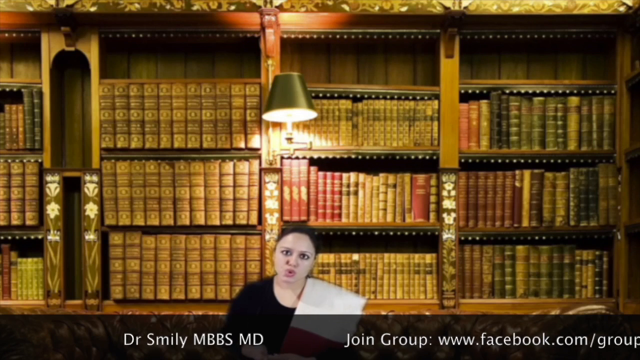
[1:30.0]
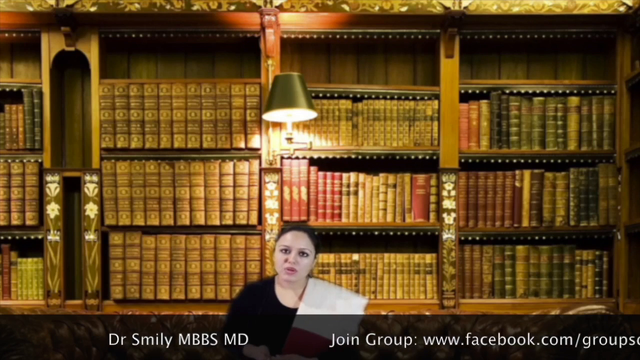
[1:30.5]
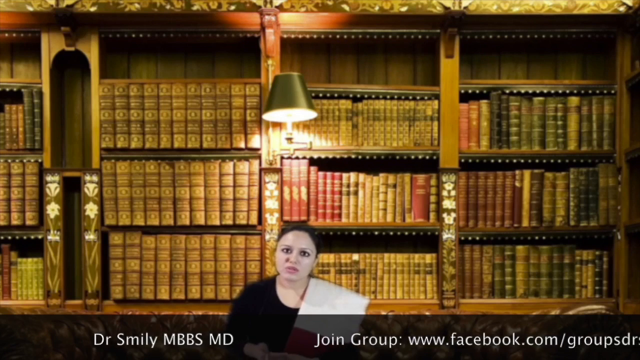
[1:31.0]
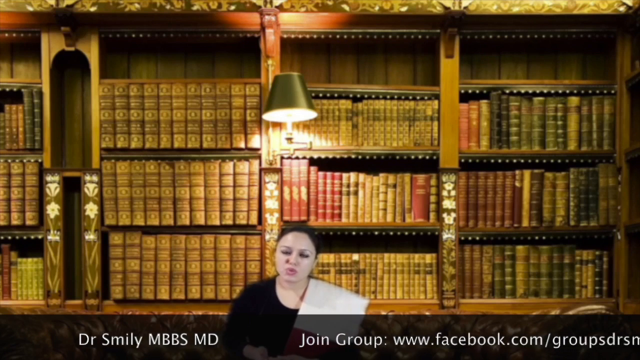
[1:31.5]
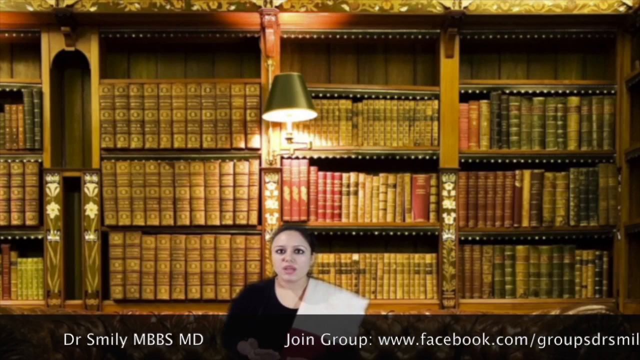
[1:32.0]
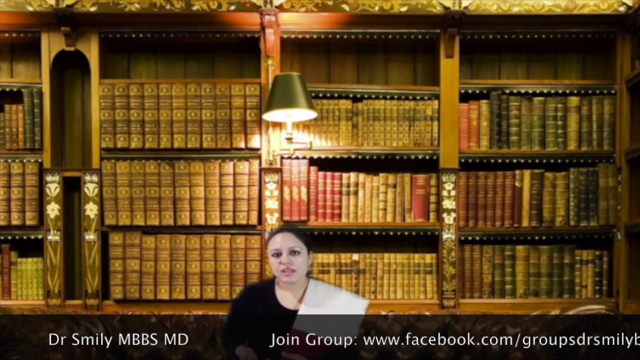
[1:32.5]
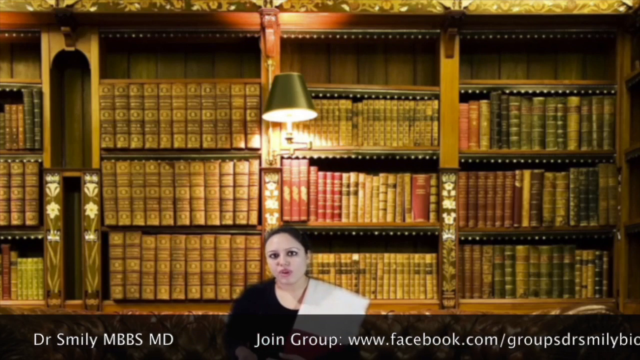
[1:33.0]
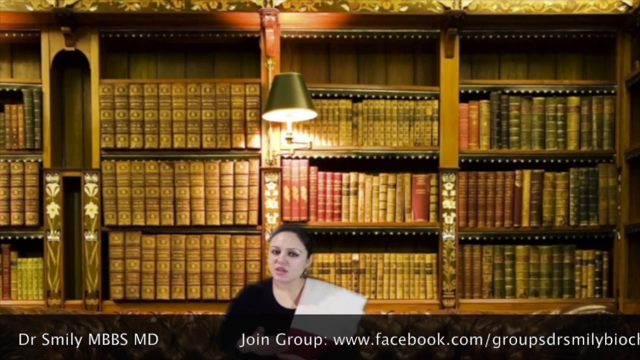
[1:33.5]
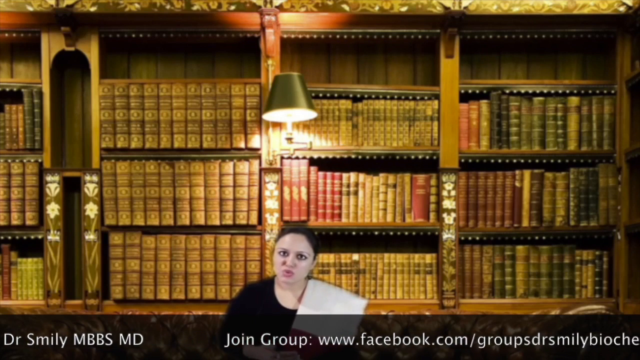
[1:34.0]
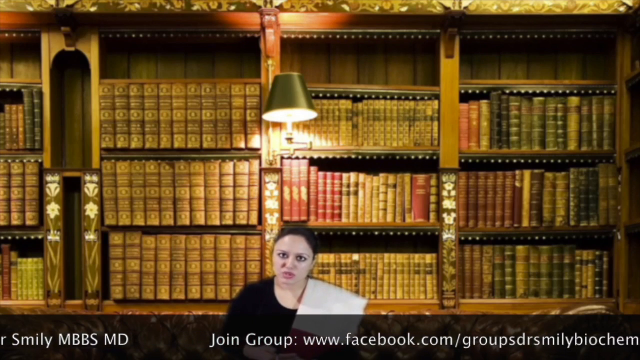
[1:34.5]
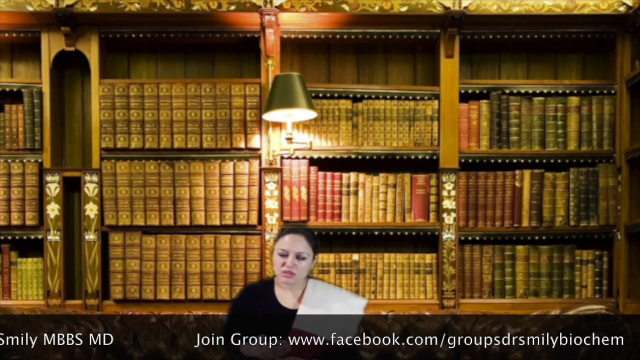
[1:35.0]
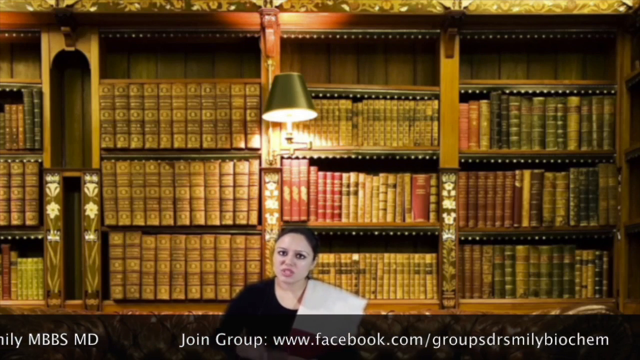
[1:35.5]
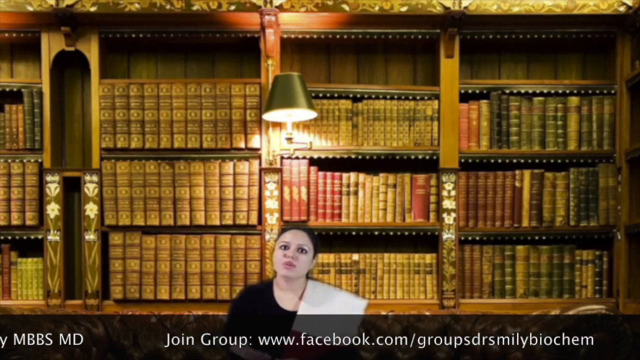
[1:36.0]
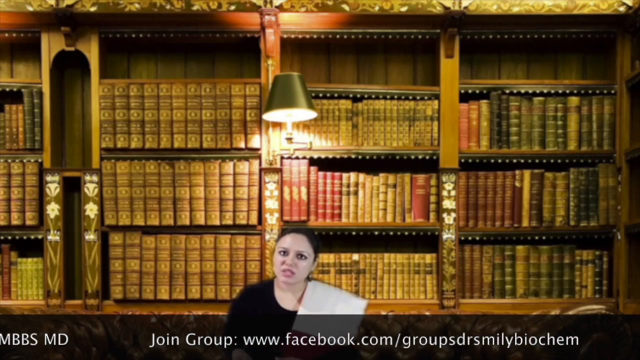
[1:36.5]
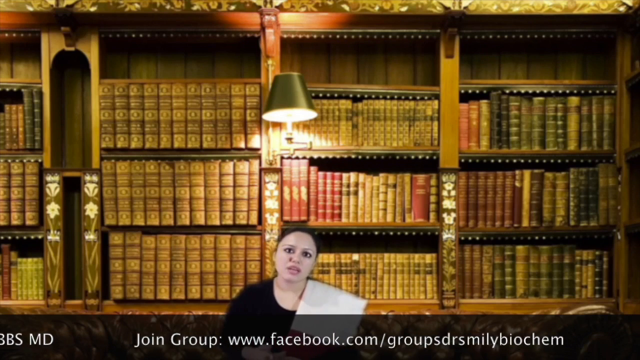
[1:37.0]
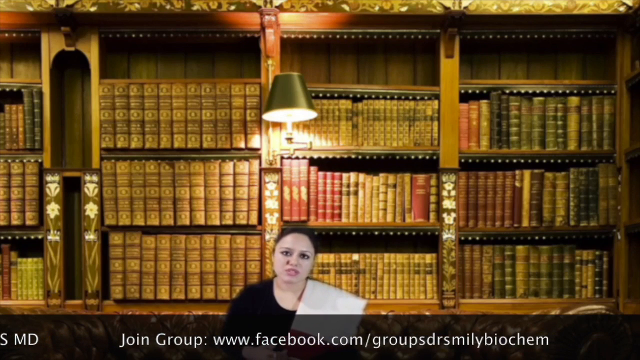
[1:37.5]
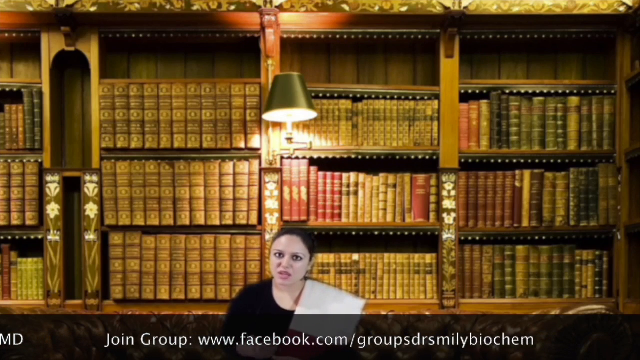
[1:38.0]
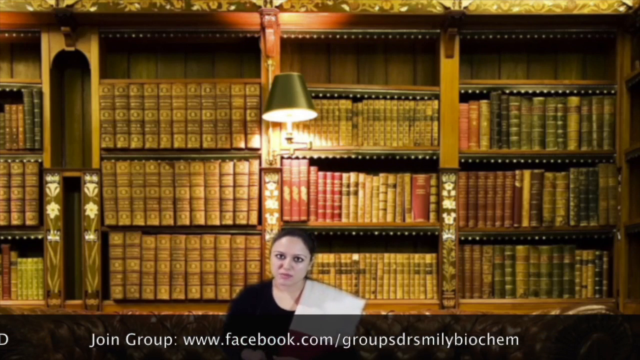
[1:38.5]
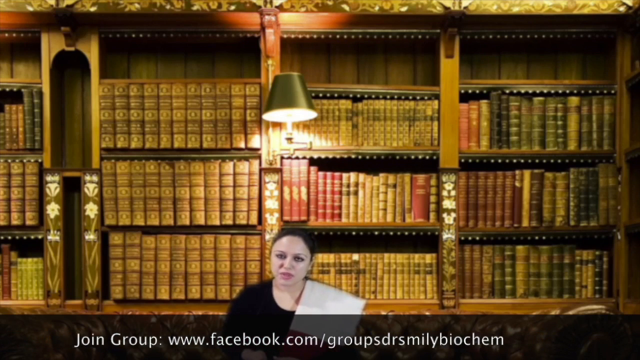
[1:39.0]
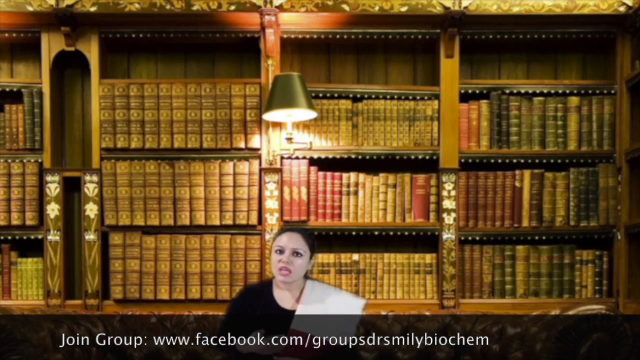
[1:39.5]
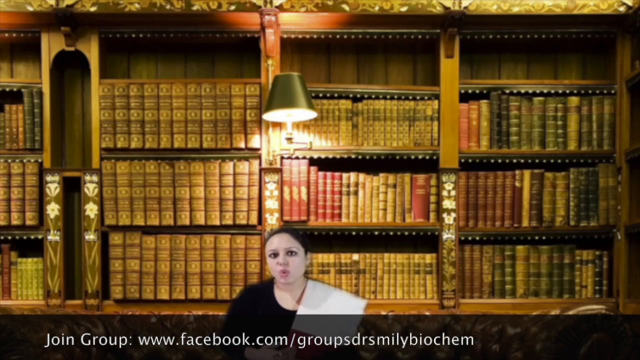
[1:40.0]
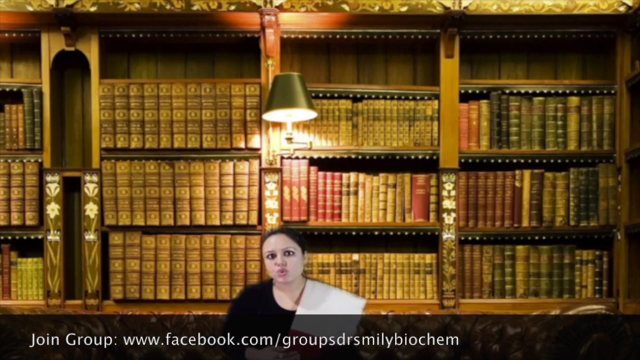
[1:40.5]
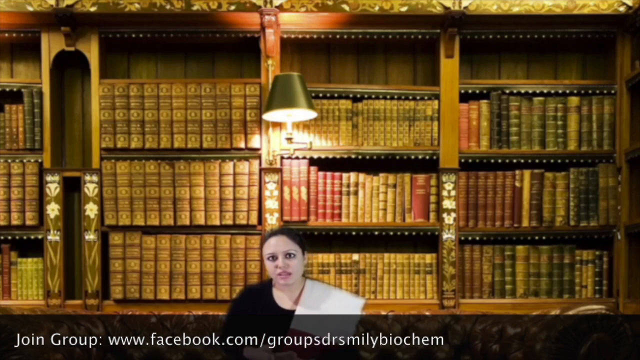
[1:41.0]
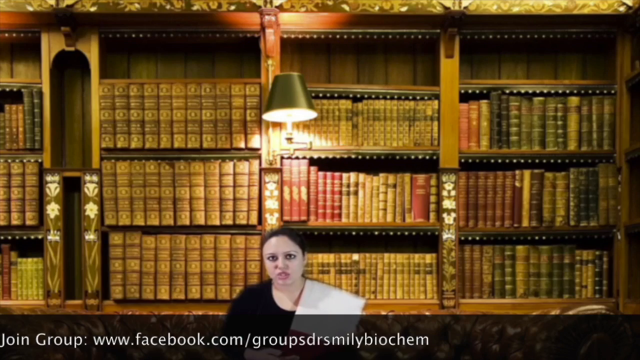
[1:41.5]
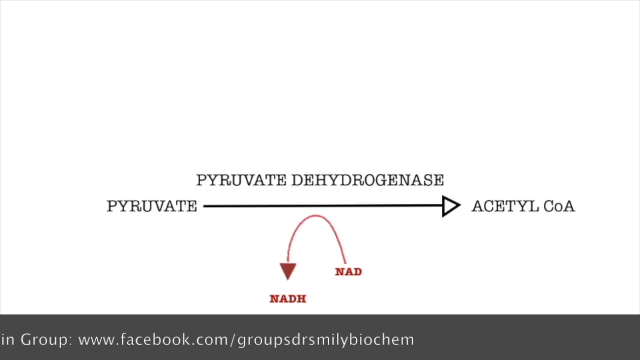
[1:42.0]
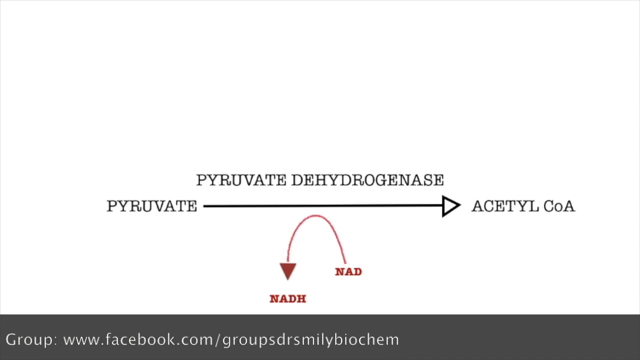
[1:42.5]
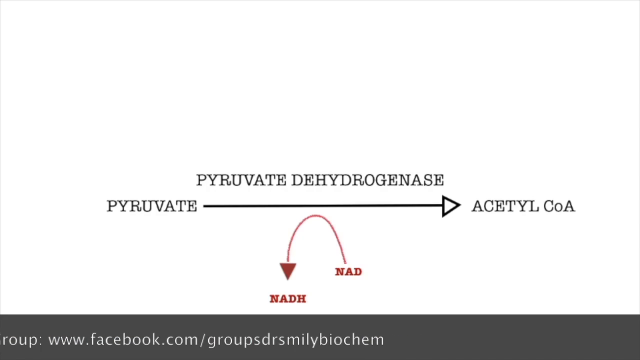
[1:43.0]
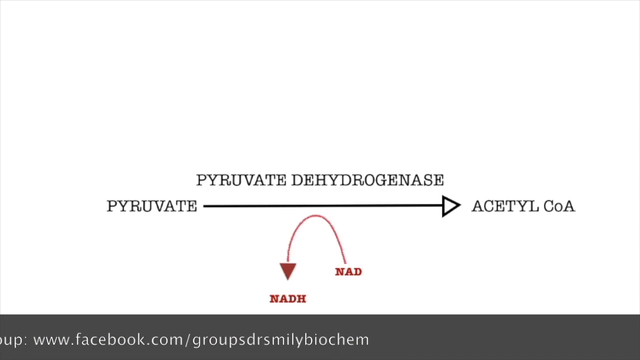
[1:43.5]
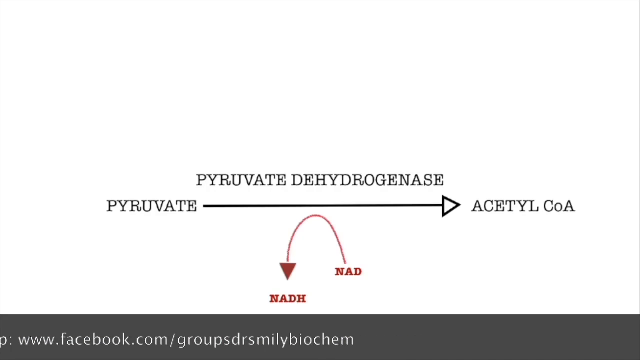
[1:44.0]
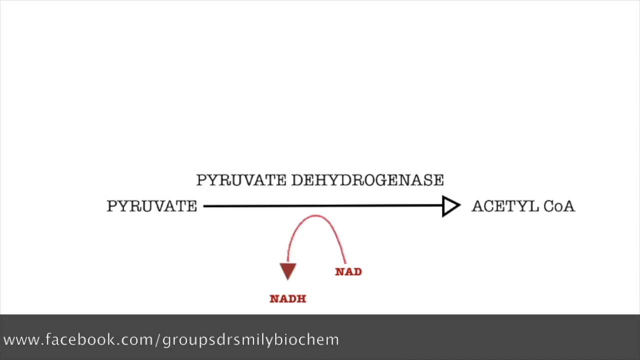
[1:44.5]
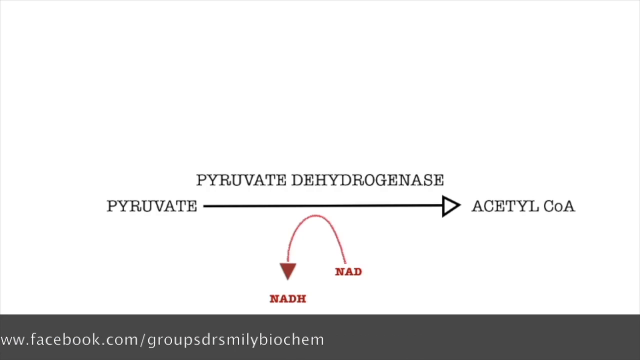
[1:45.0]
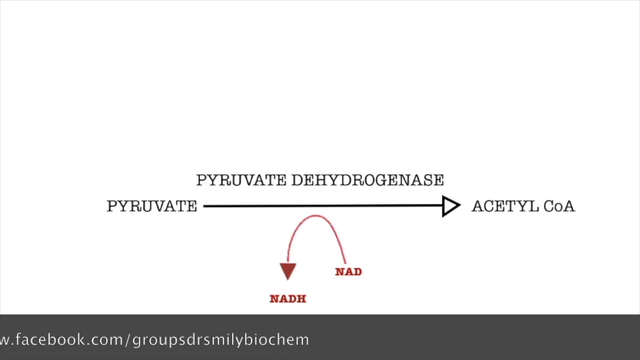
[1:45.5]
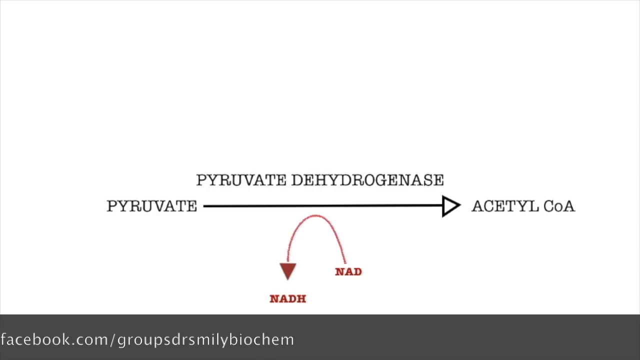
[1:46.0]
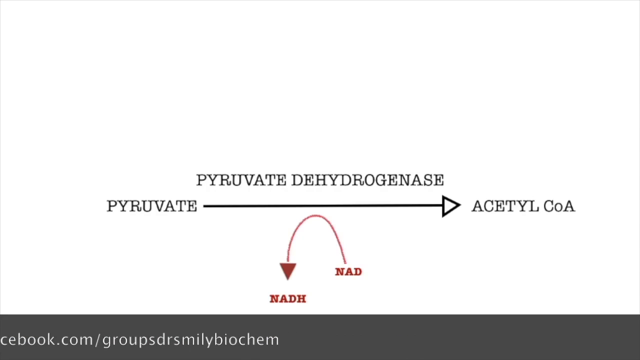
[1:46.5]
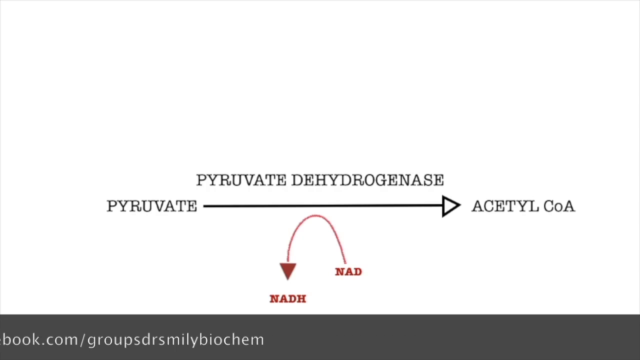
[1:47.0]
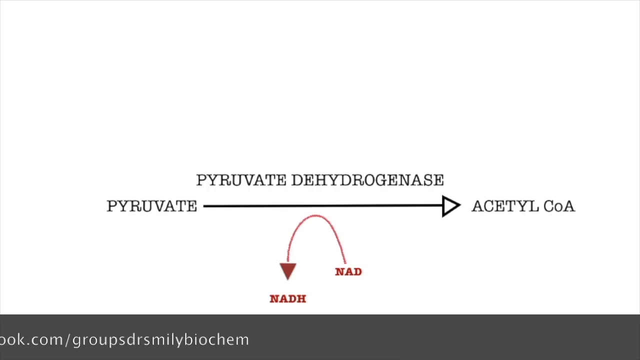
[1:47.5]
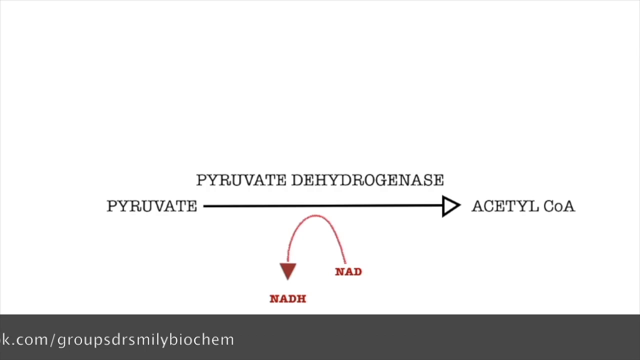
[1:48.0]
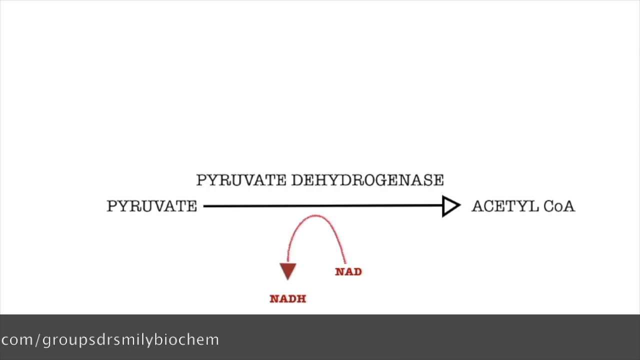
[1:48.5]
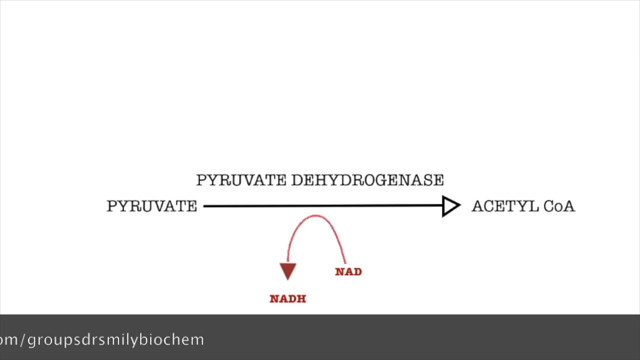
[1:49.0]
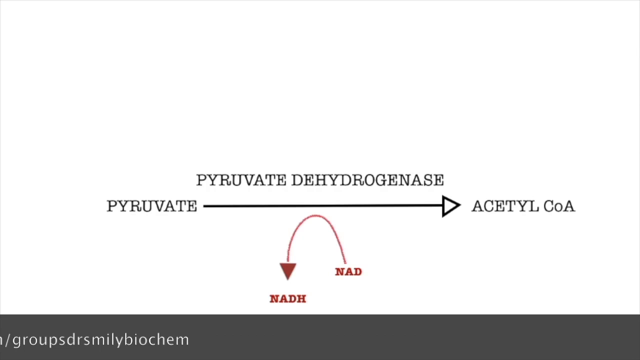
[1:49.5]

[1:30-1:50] The doctor sits on the couch. The title underneath her reads "Dr. Smiley" and refers to joining her group on Facebook.com. She has brown hair and wears a dark long-sleeved shirt along with a sash over her shoulder. Behind her is a bookshelf with extremely large books that look to be oversized for the image, and she is sitting on a large leather couch. She is talking, and she brings up a few diagrams showing pyruvate dehydrogenase, with pyruvate and acetyl-CoA, and NAD forming NADH. The video then returns to the doctor.